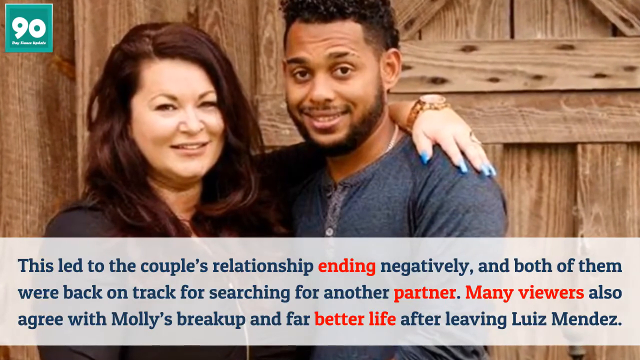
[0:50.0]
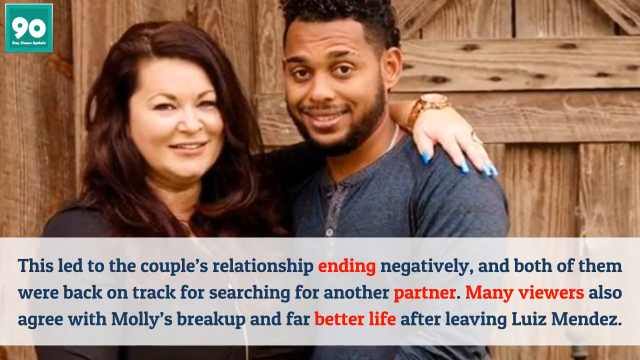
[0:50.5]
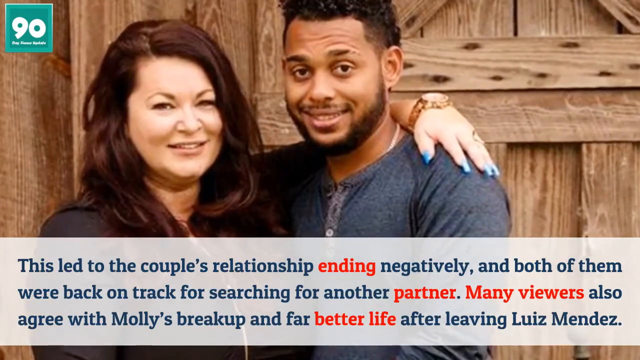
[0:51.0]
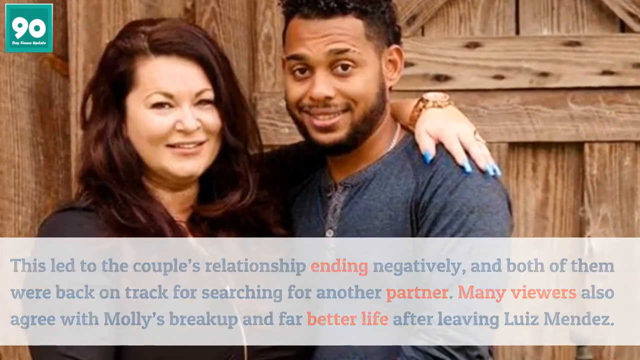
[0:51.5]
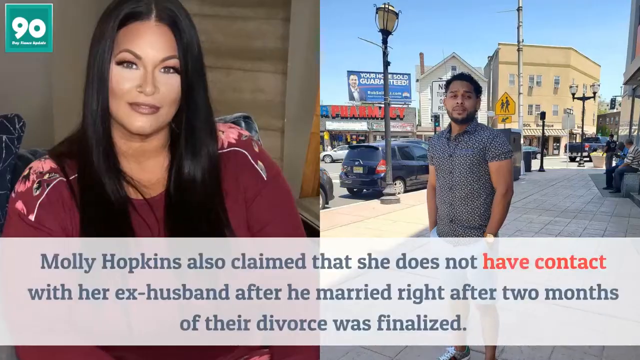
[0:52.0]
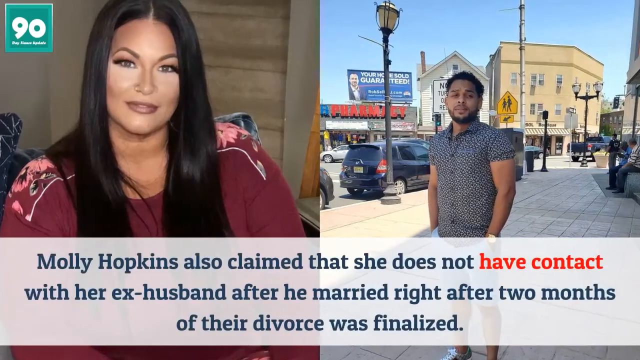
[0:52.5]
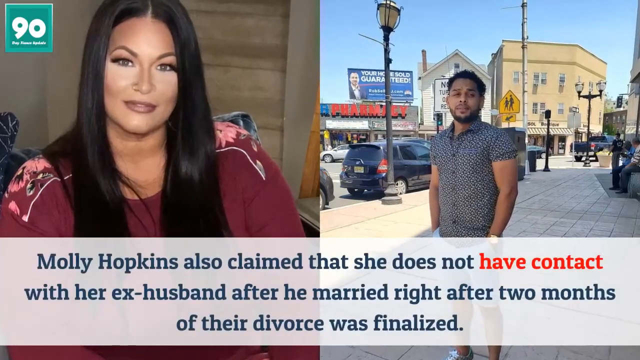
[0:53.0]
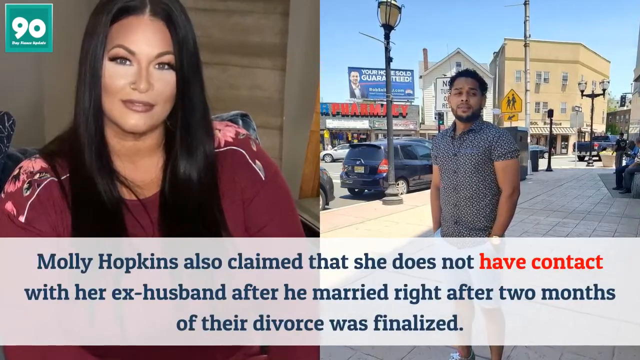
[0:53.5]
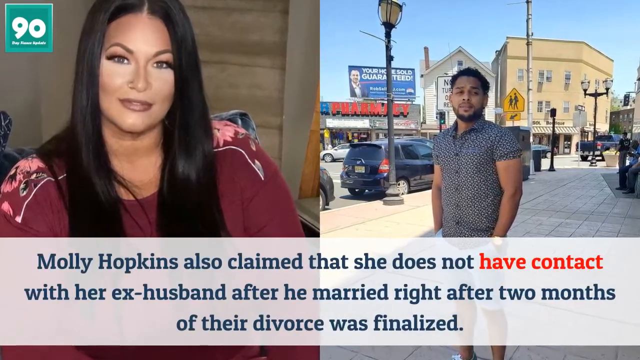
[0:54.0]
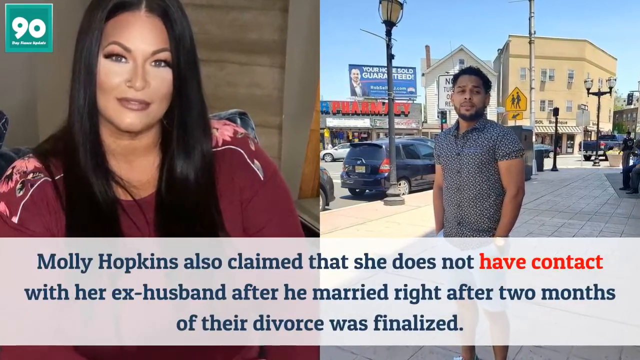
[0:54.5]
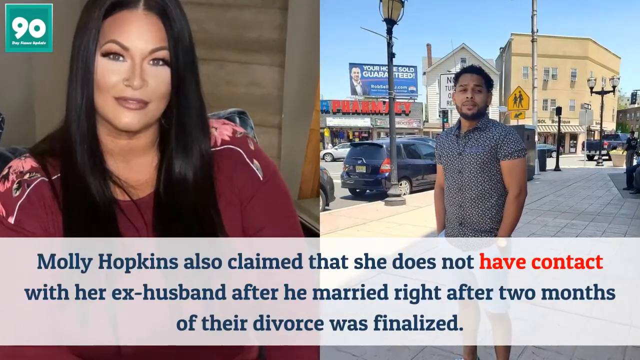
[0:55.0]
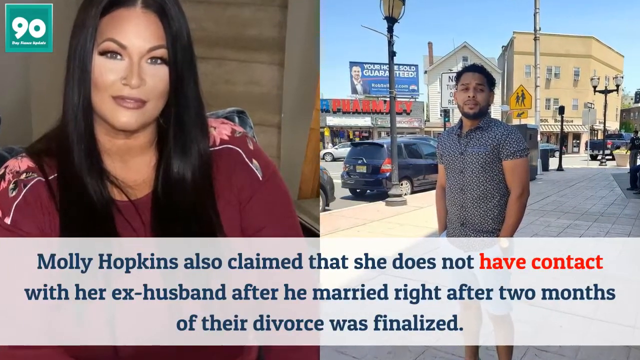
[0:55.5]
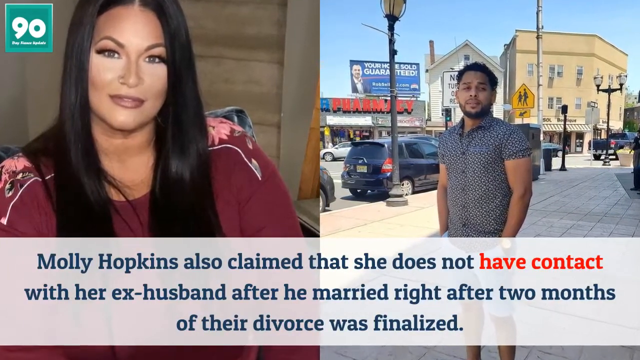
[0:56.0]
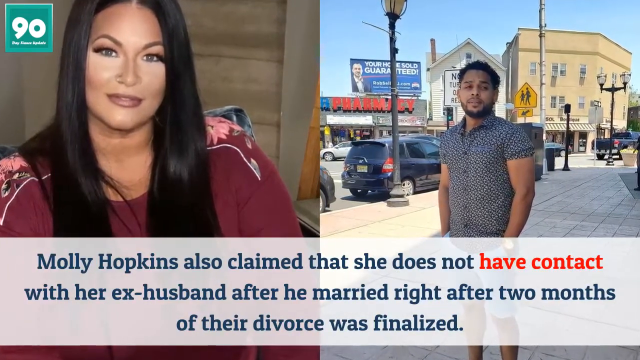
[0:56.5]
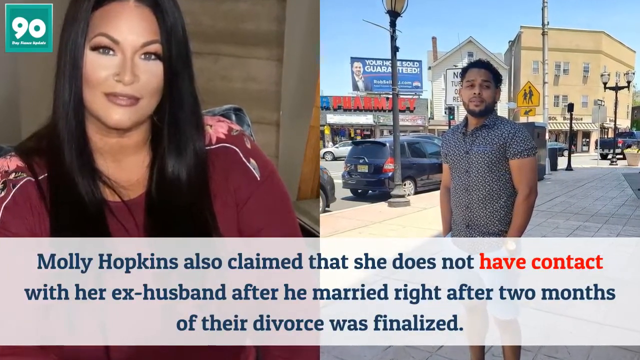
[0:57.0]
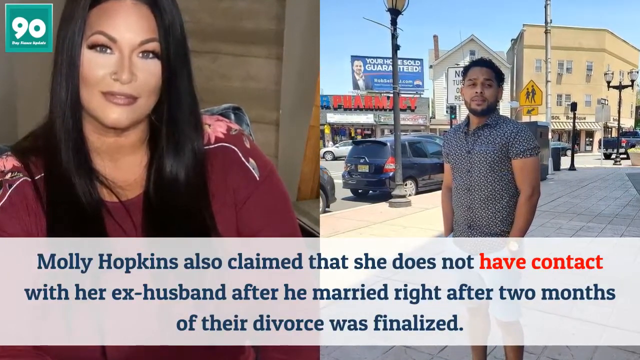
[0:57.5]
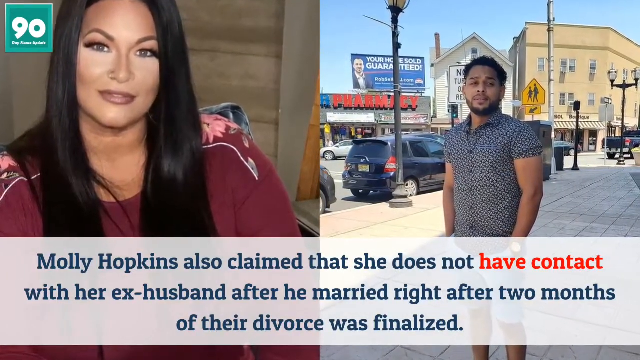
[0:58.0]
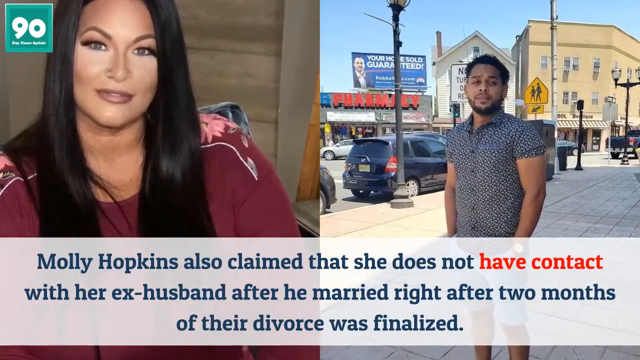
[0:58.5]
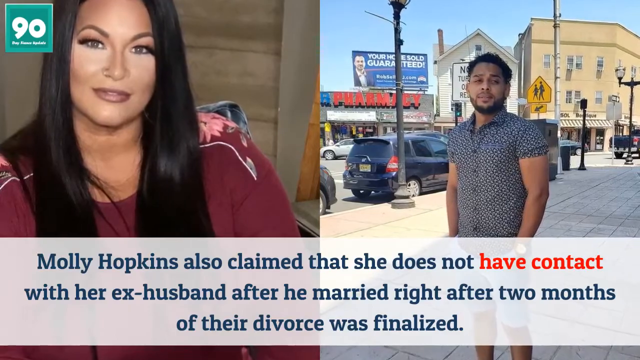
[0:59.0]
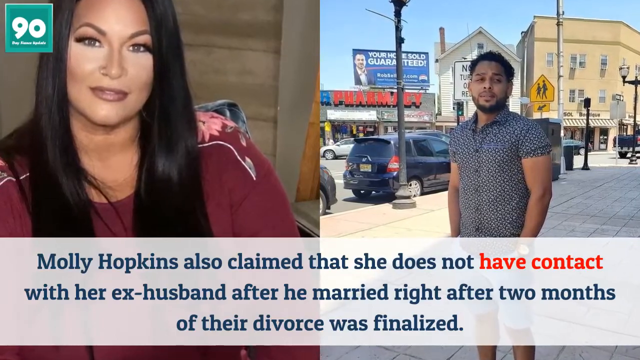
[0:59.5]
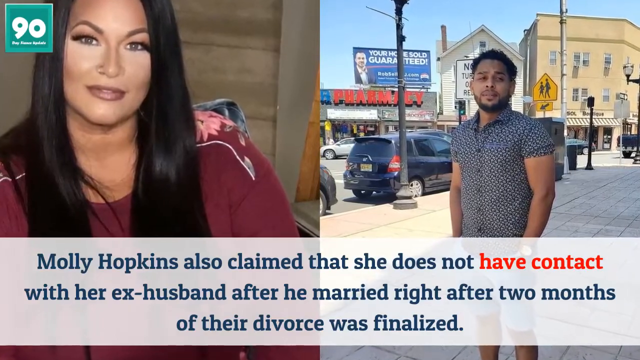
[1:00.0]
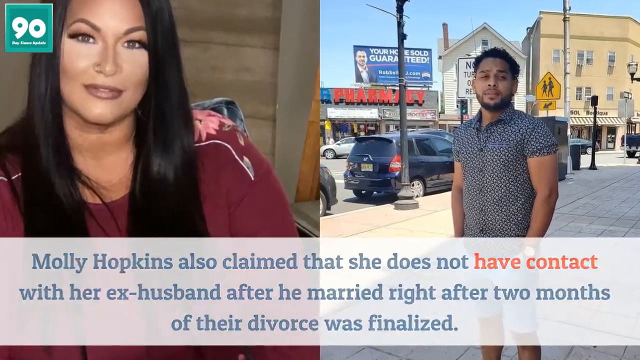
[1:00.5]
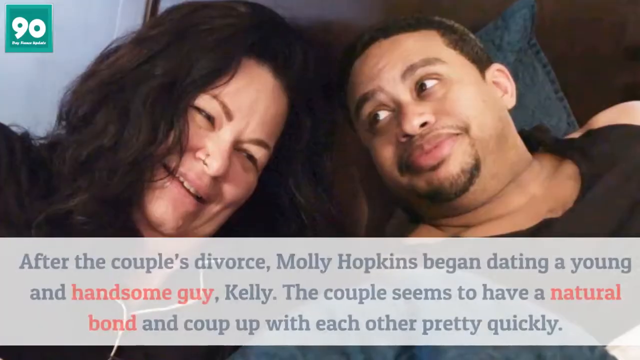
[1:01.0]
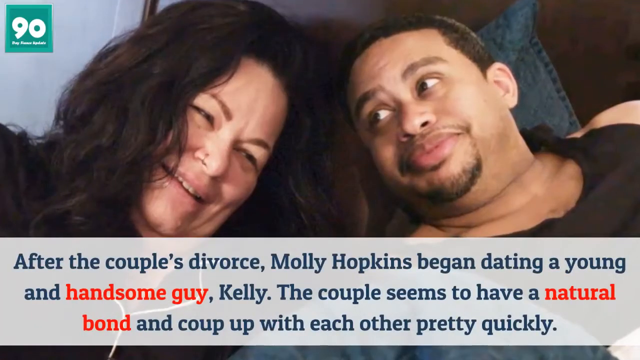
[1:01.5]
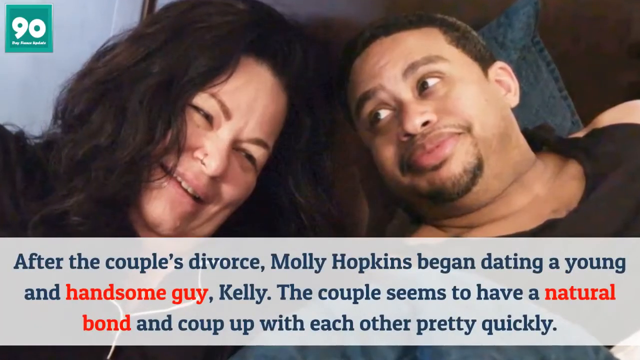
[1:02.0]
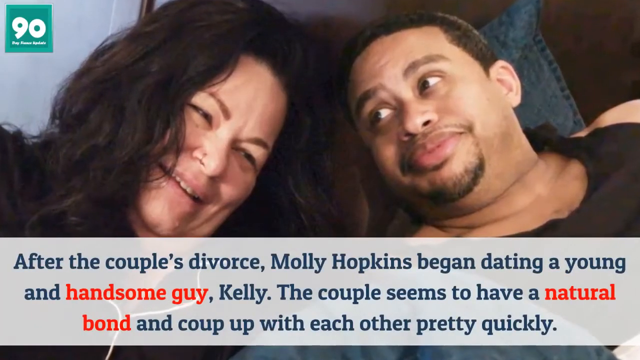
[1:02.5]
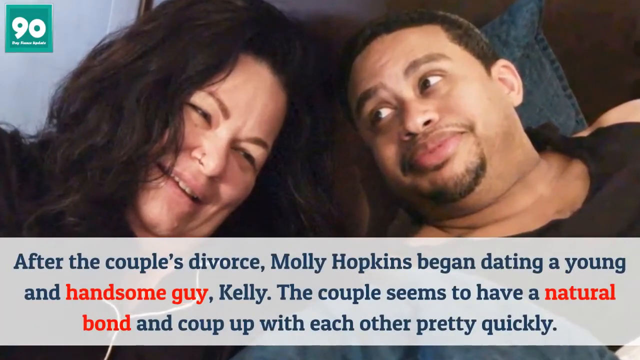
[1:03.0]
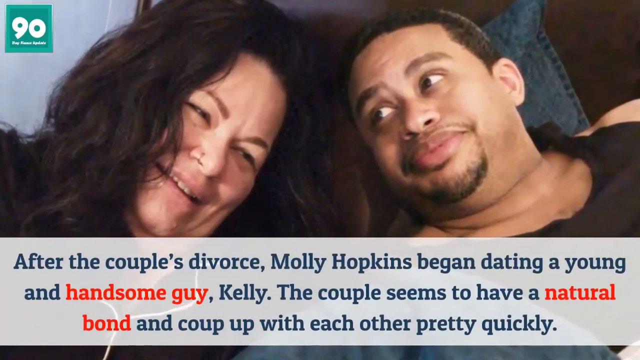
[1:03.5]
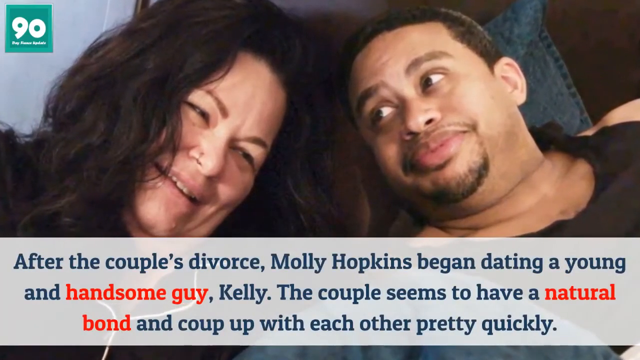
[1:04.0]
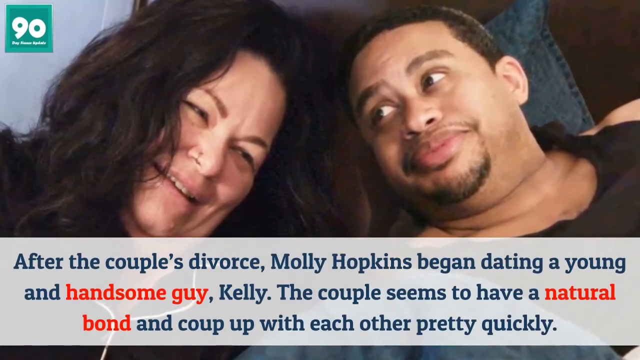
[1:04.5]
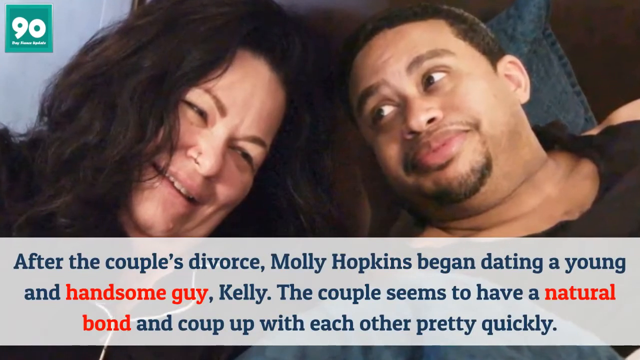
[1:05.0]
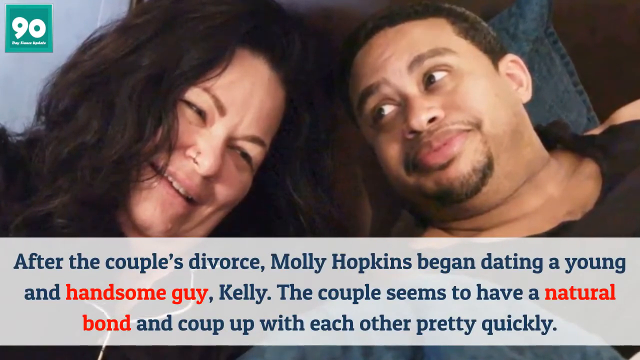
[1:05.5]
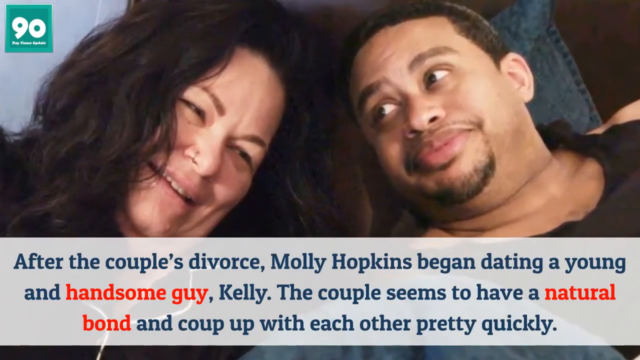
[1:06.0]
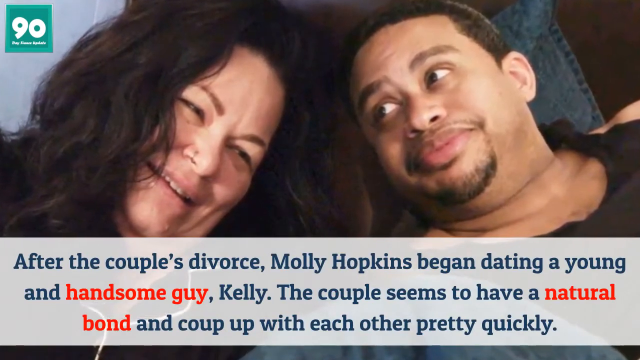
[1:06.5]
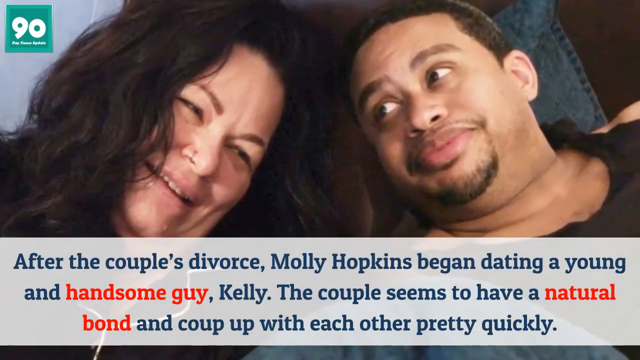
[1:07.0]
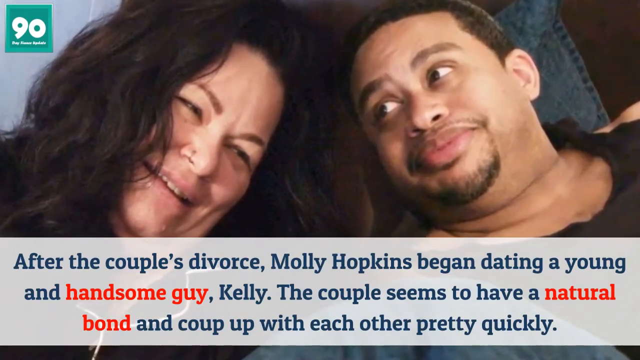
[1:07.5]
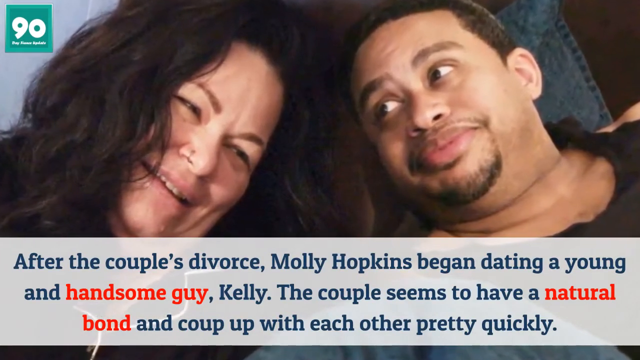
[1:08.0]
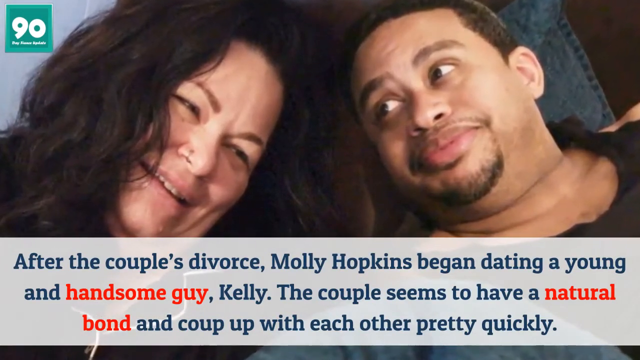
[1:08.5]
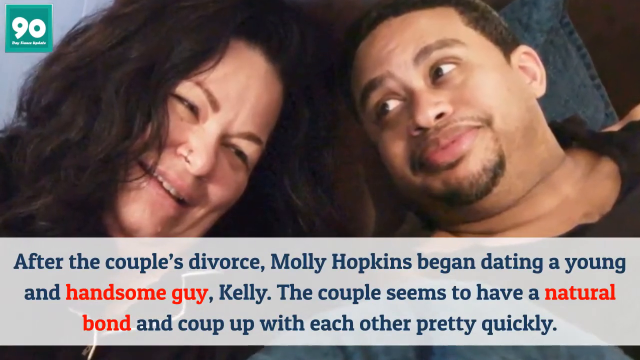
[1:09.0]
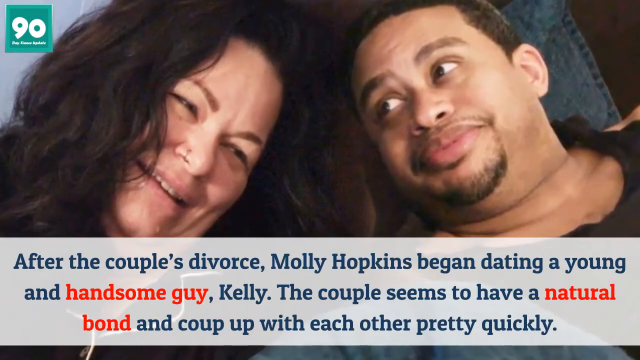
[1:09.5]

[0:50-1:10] An image appears to show a couple, with a woman standing on the left side and a man standing on the right side. The woman has her left arm around the man's shoulders. The man wears a blue shirt and has curly hair, a beard and a mustache. The woman has long dyed auburn hair and wears a black outfit; she has a gold watch around her left wrist, and long blue nails can be seen on her left hand. Over the image is a transparent white banner with words that say "this led to the couple's relationship ending negatively and both of them were back on track for searching for another partner many viewers also agree with molly's breakup and far better life after leaving luis mendez". The images then transition to show two more images of the subjects.